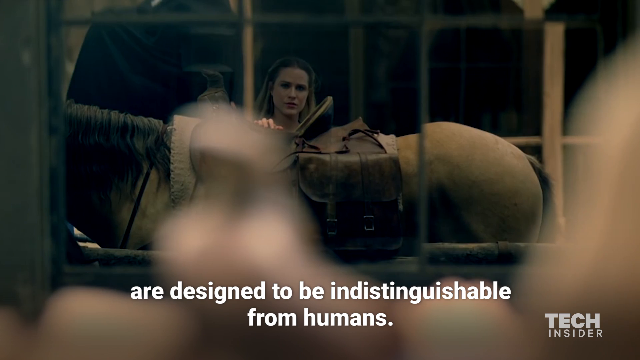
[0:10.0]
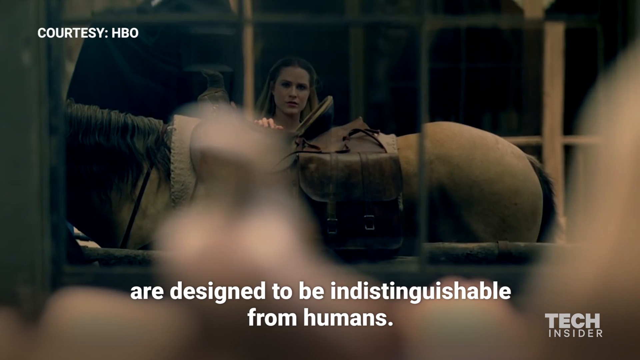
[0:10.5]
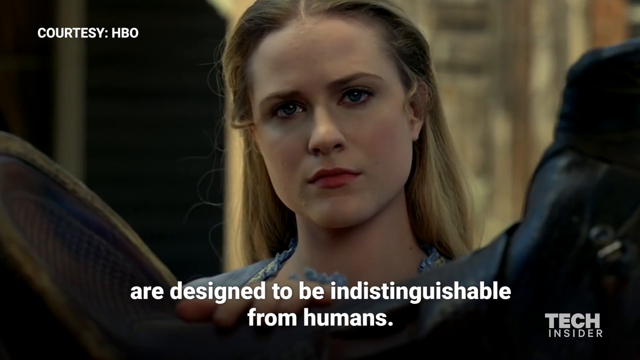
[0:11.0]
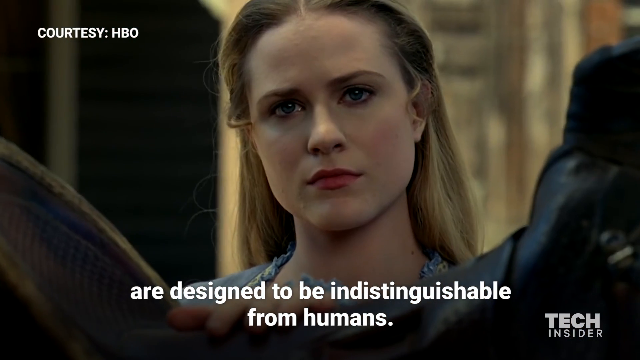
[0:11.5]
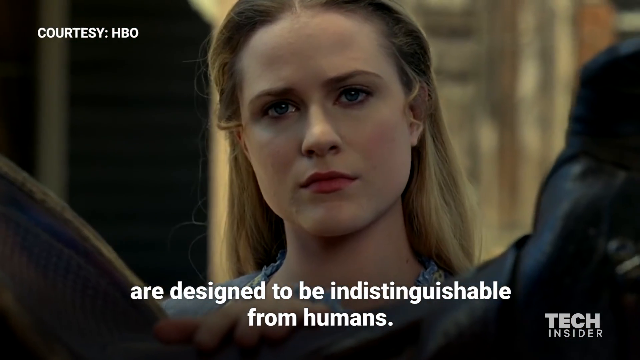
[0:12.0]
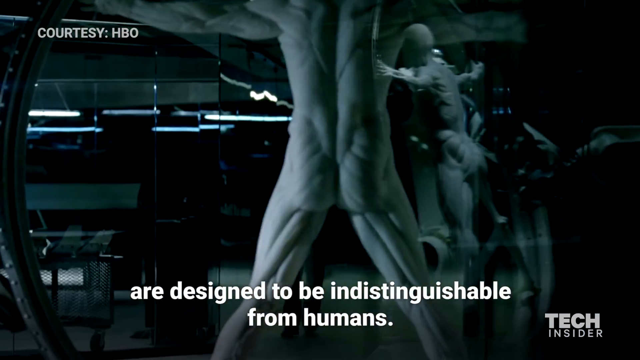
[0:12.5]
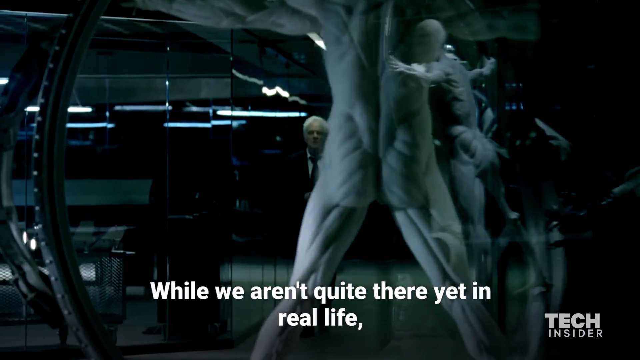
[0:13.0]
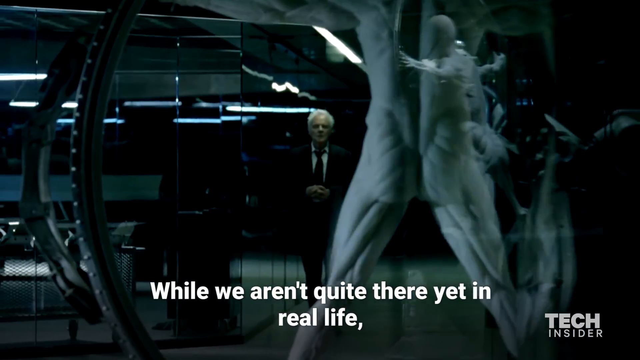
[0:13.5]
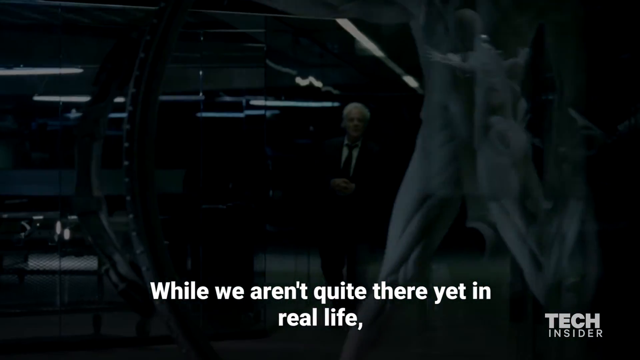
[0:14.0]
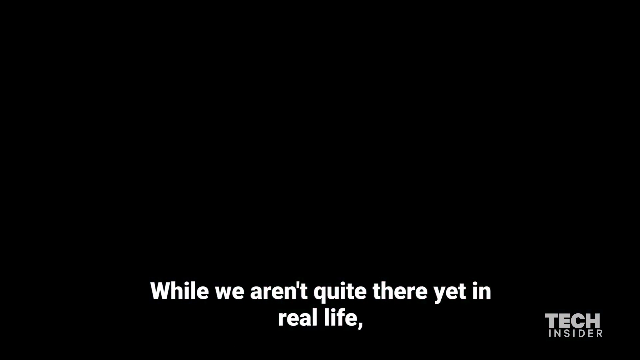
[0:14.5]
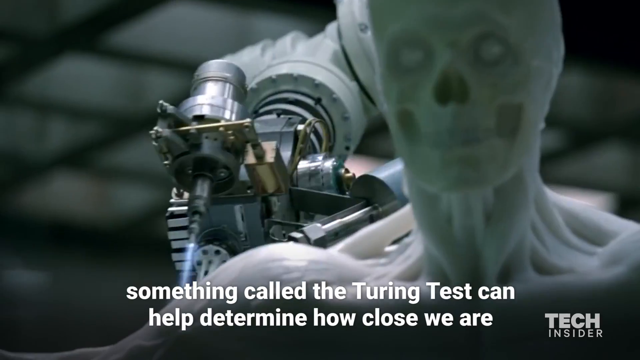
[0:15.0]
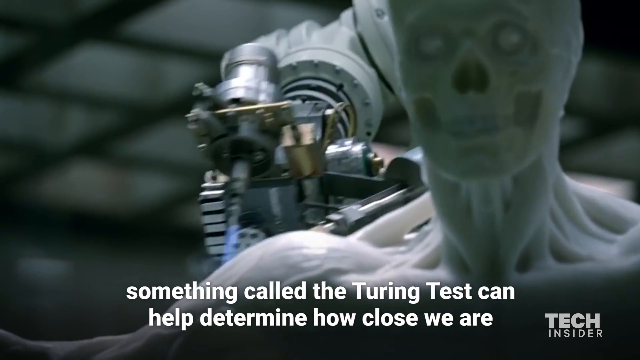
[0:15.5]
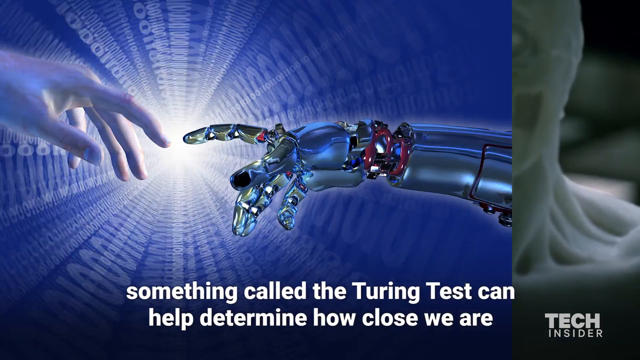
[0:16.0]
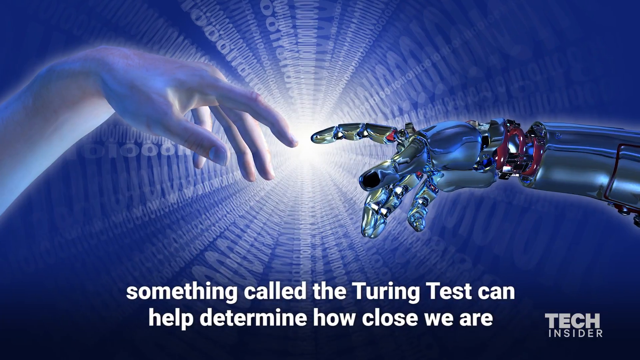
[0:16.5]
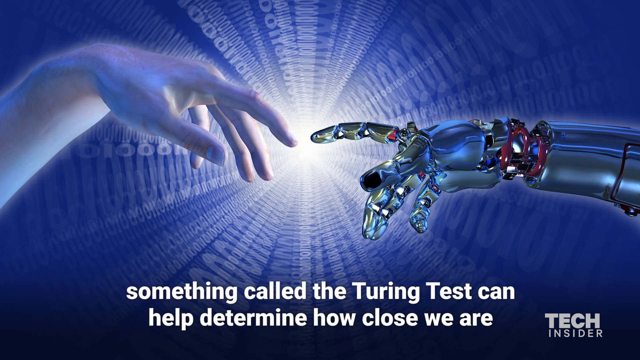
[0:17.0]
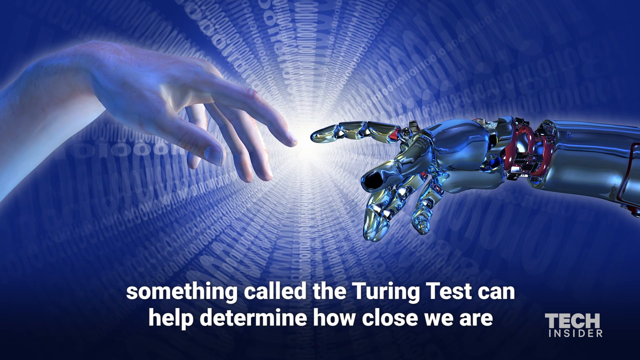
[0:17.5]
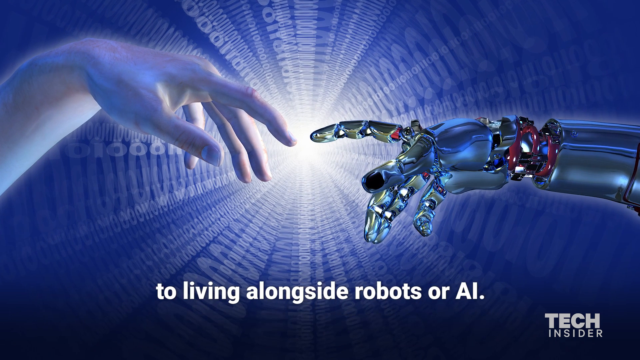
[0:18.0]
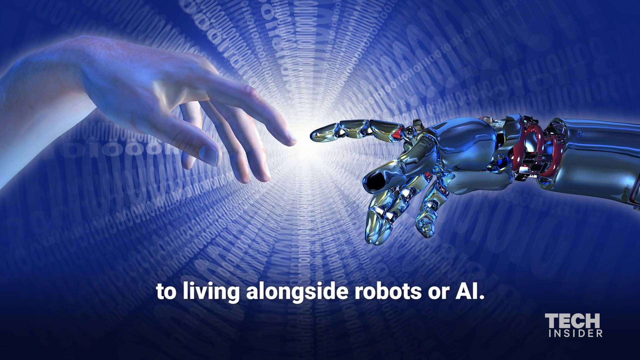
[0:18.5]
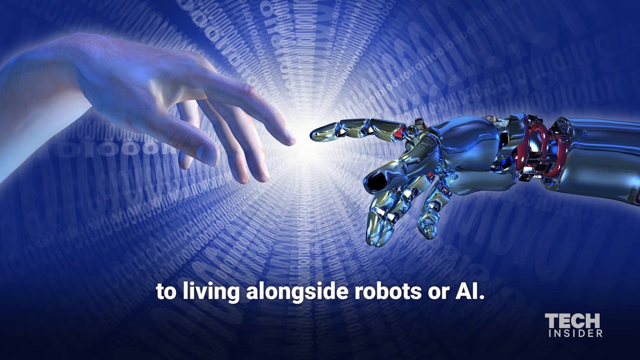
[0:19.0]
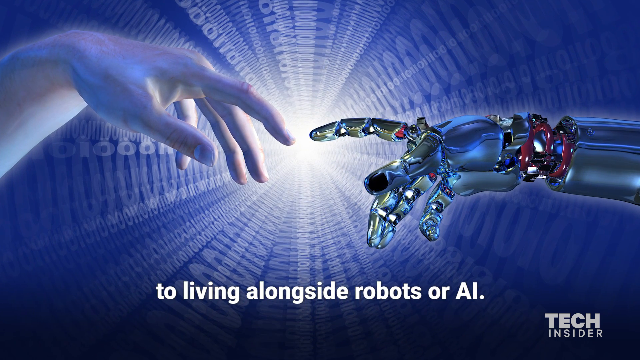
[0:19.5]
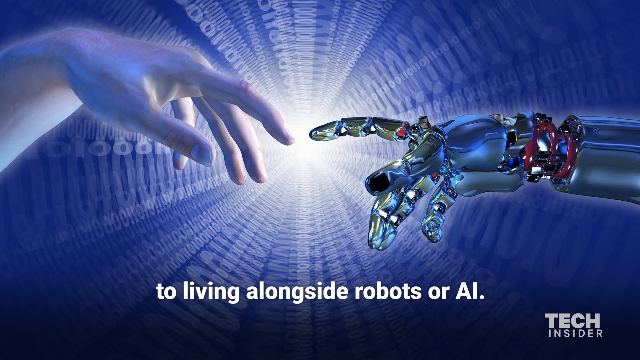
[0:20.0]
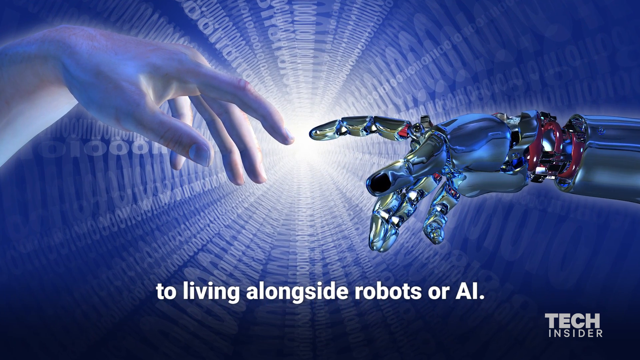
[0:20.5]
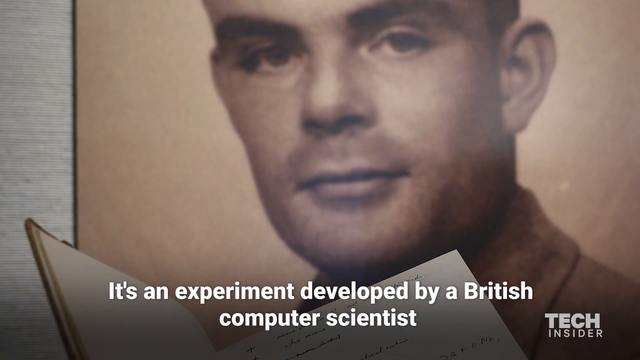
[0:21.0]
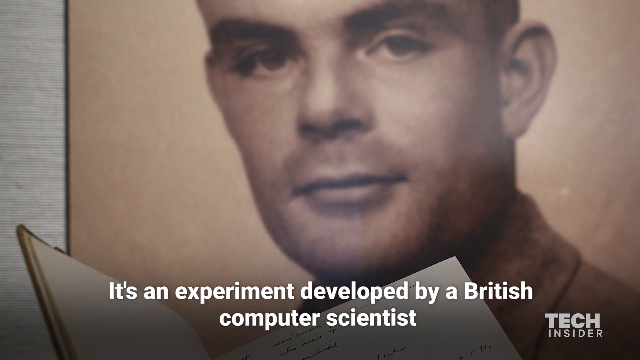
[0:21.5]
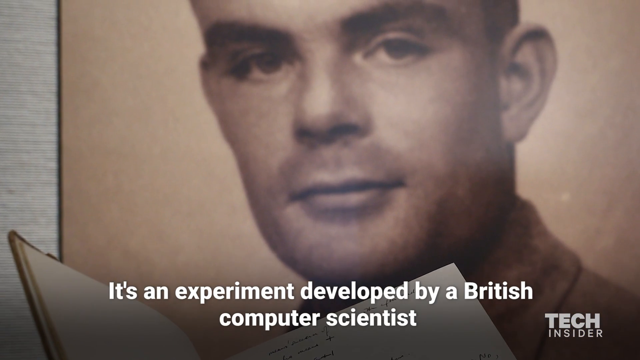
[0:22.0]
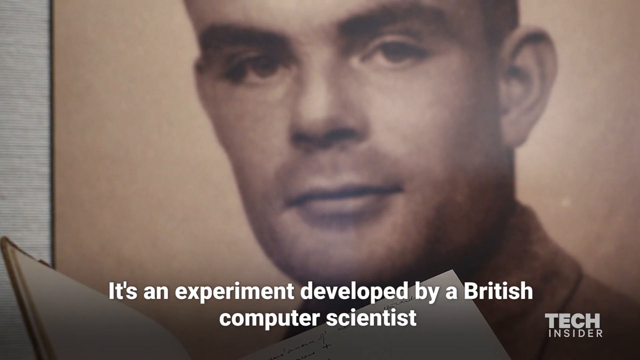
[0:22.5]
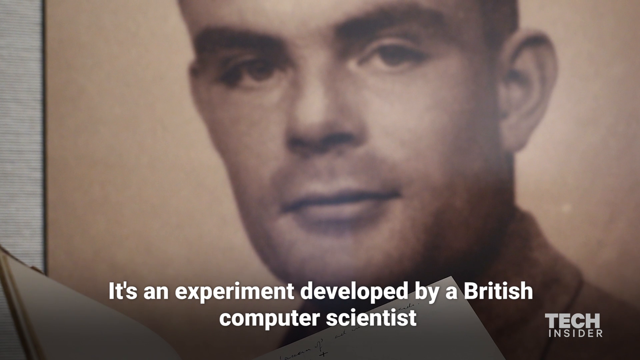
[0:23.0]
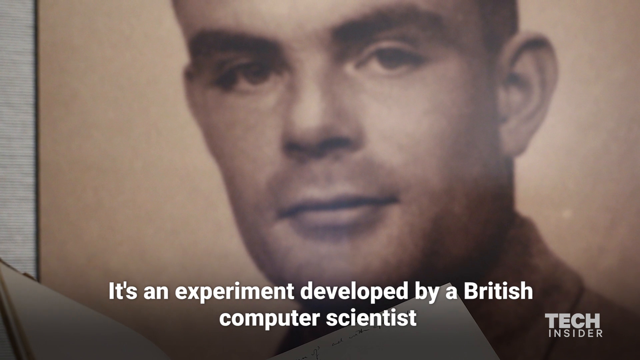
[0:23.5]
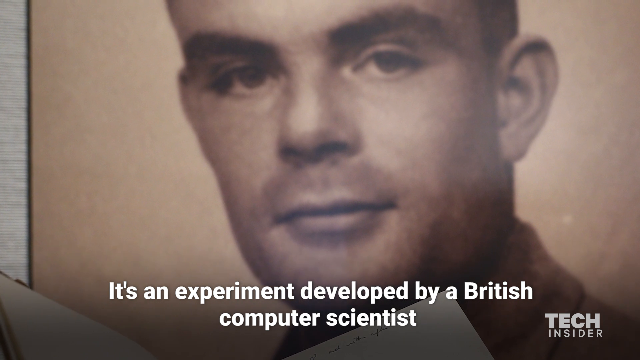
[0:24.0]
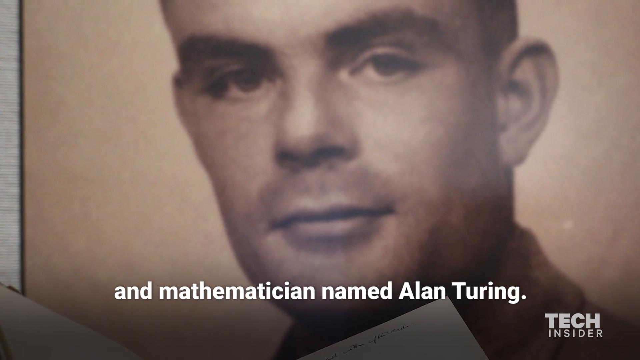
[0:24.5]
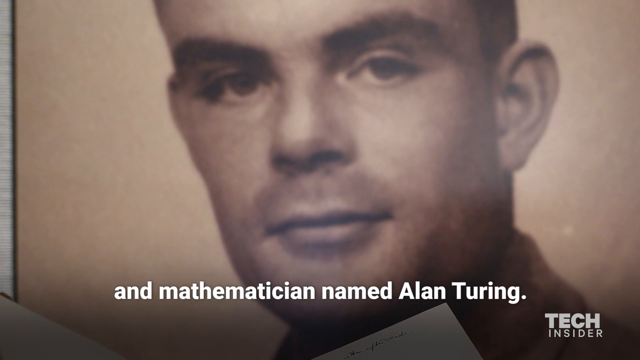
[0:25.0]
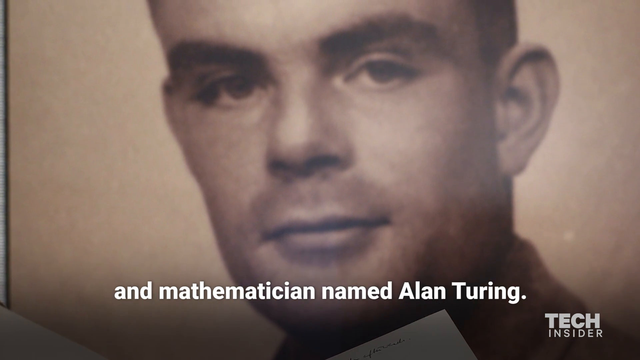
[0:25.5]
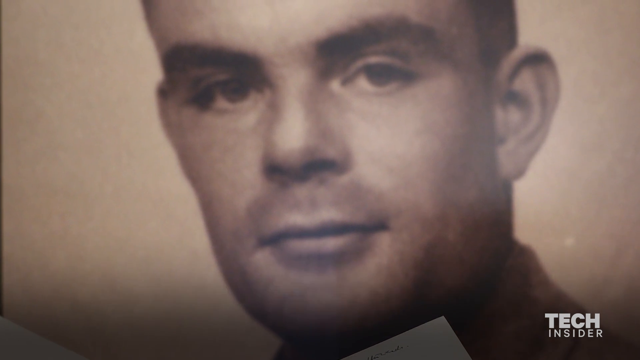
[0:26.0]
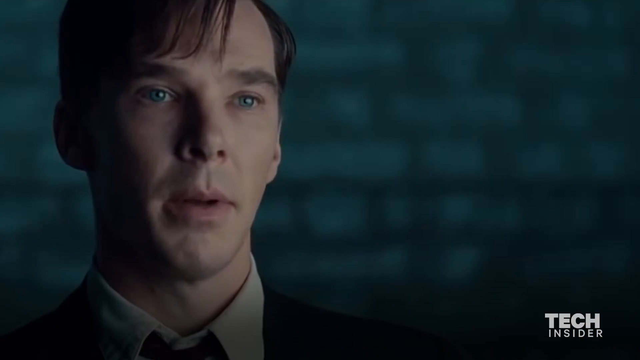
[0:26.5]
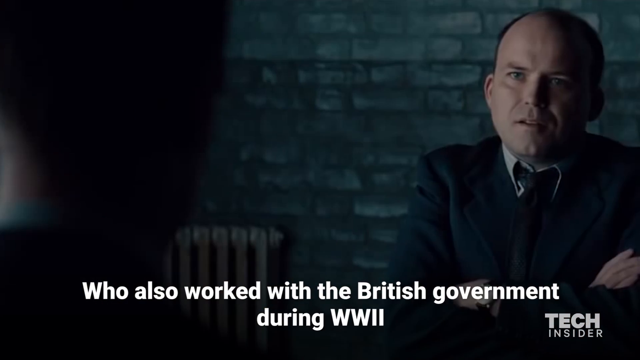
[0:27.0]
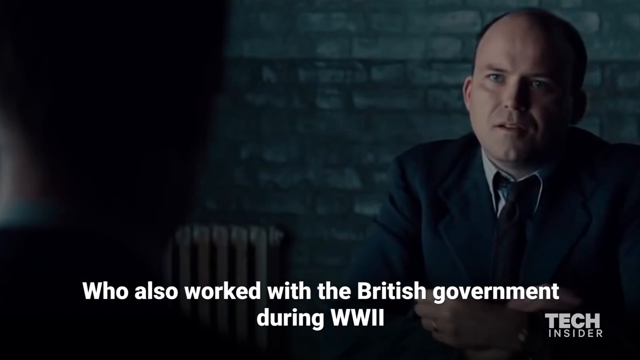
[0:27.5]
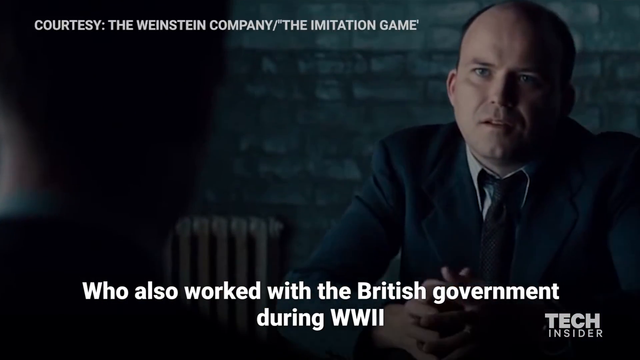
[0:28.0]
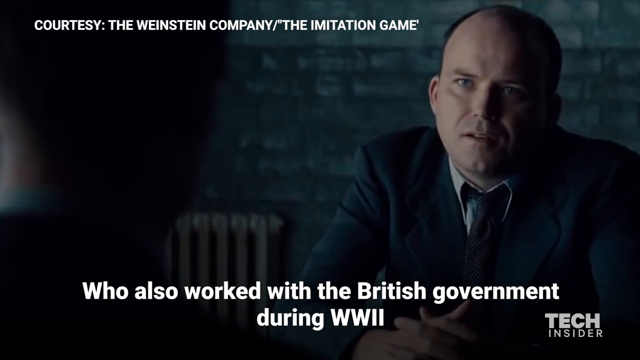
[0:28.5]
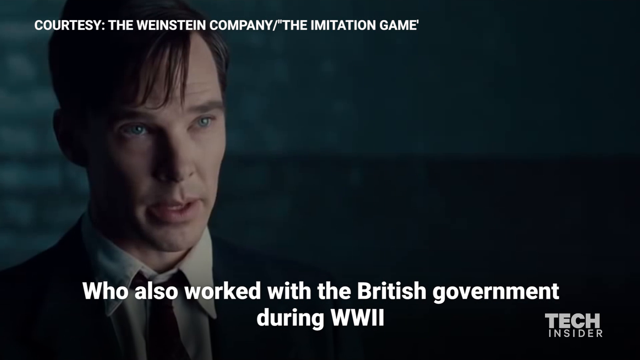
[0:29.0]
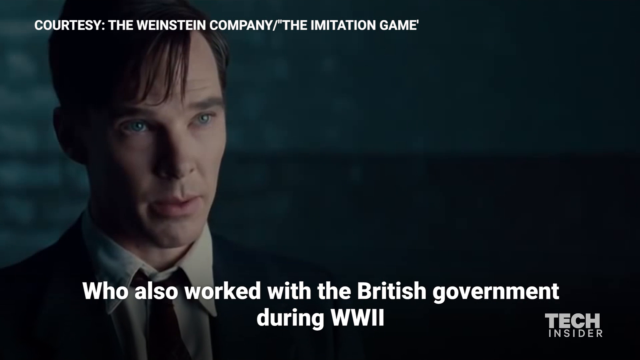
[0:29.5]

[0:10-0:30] White text in the upper left reads "Courtesy HBO", and the view zooms in on the face of the woman behind the horse. She has a slightly puzzled face and is wearing a blue blouse. The scene switches to a nude human backside superimposed over the whole scene, with vague, dark sci-fi scenery and linear lights in the background. Another nude human stands in profile with arms spread out, and to the left of that, a nude human man with gray hair in a suit comes slowly walking toward the camera before the scene blacks out. Next, a white, plastic-looking human skull with some musculature over it is in the foreground, being worked on by a laser machine to its left, over its shoulder. The subtitle says "Something called the Turing Test can help determine how close we are." The scene moves to a picture of a human hand on the left and a robotic hand on the right, an imitation of Michelangelo's Sistine Chapel, with a pinpoint of light behind them from which multiple series of ones and zeros radiate. The subtitle changes to "to living alongside robots or AI" as the view zooms in on the hands. A sepia picture of the real Alan Turing follows, with the subtitle "it's an experiment developed by a British computer scientist", and as the view zooms in on his face the subtitle reads "a mathematician named Alan Turing". That slide moves to the right, revealing a scene with Benedict Cumberbatch on the left, his hair parted and short-cropped, slowly speaking in front of a blurred turquoise brick-like pattern. It shifts quickly to a balding man in a black suit with a blue collar and dark tie, with a radiator in the bottom left corner; he is kind of leaning forward with a puzzled look. The subtitle changes to "who also worked with the British government during World War II", he leans forward, and text in the upper left corner reads "courtesy the Weinstein company the imitation game". It moves back to Benedict Cumberbatch as the subtitle says "to help crack secret Nazi codes".